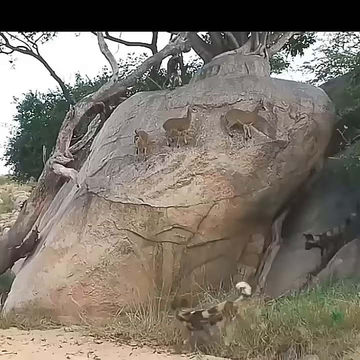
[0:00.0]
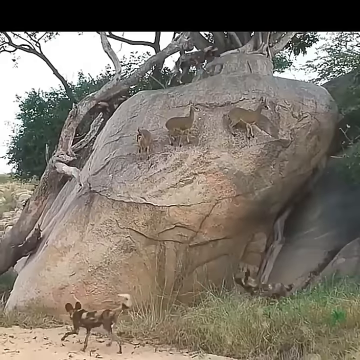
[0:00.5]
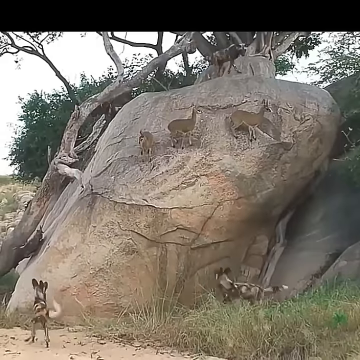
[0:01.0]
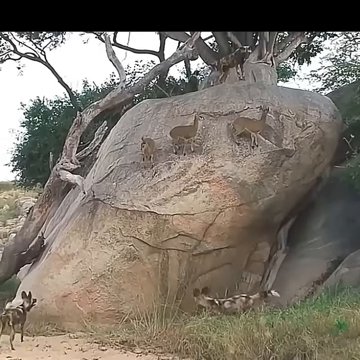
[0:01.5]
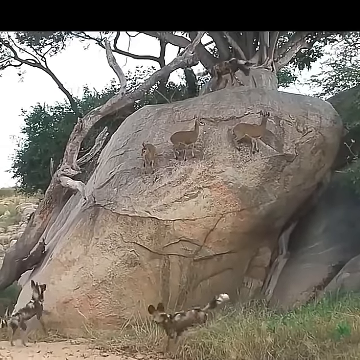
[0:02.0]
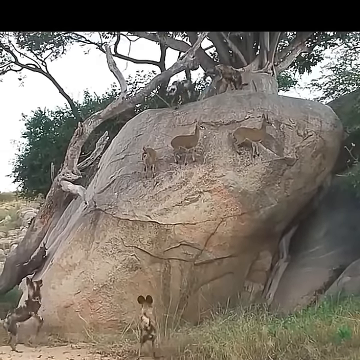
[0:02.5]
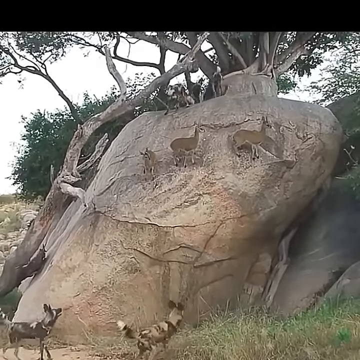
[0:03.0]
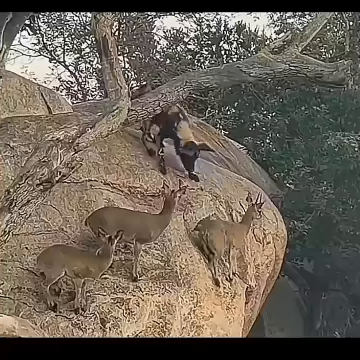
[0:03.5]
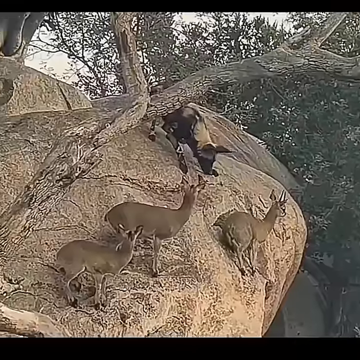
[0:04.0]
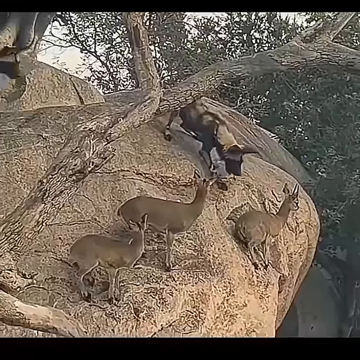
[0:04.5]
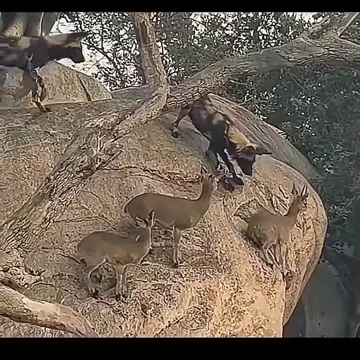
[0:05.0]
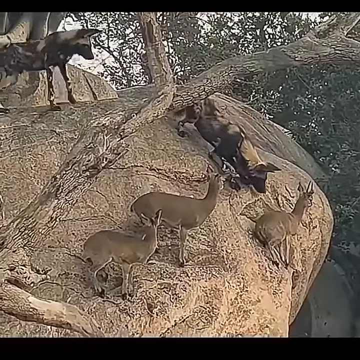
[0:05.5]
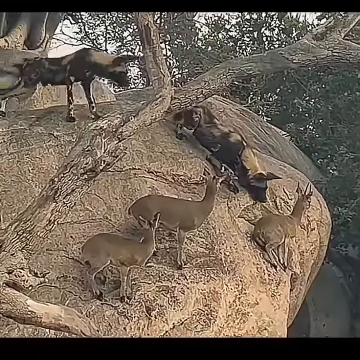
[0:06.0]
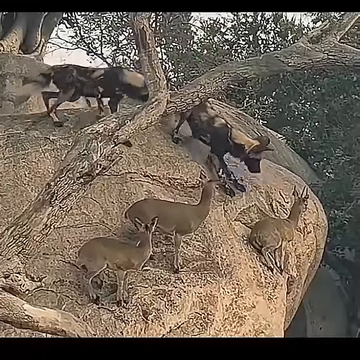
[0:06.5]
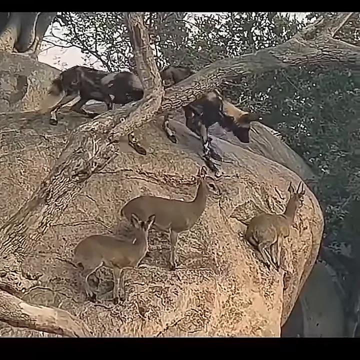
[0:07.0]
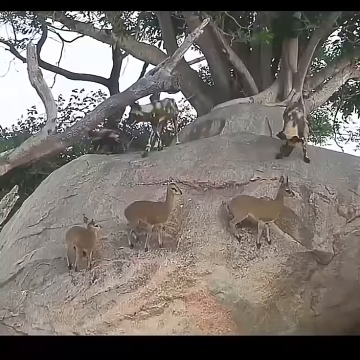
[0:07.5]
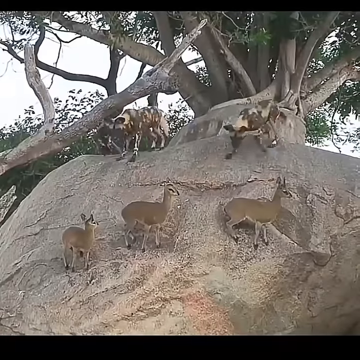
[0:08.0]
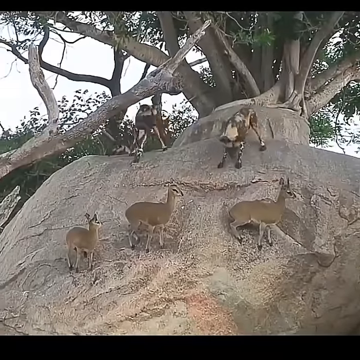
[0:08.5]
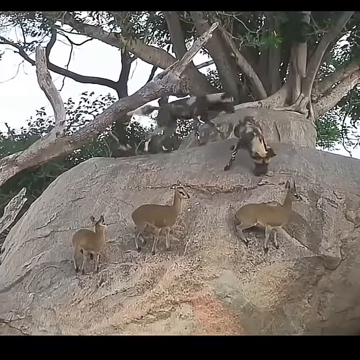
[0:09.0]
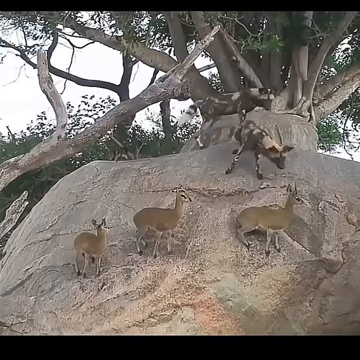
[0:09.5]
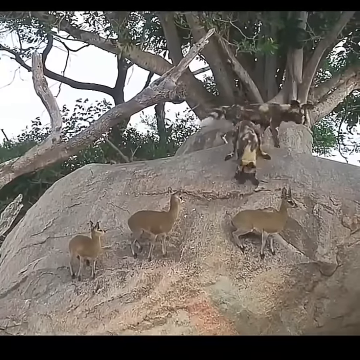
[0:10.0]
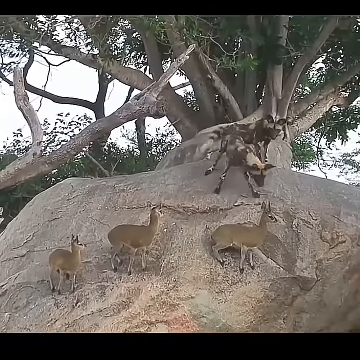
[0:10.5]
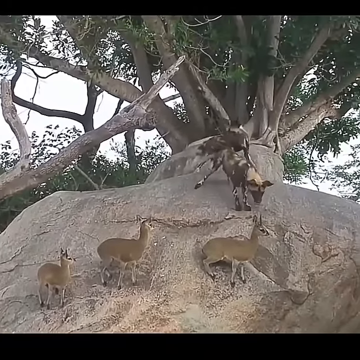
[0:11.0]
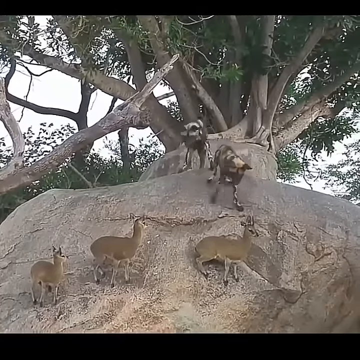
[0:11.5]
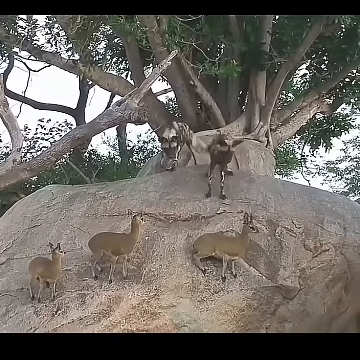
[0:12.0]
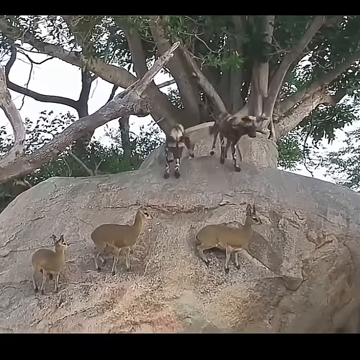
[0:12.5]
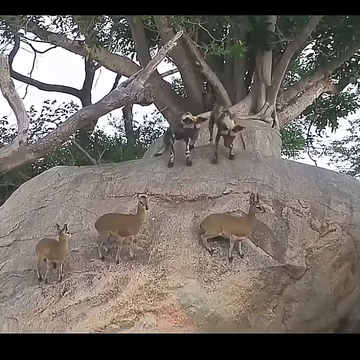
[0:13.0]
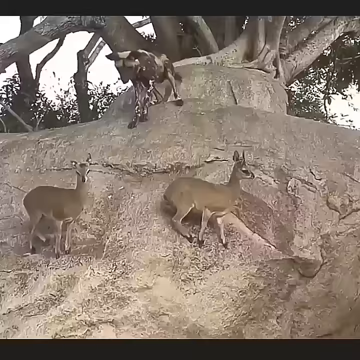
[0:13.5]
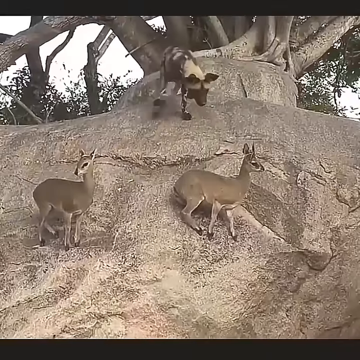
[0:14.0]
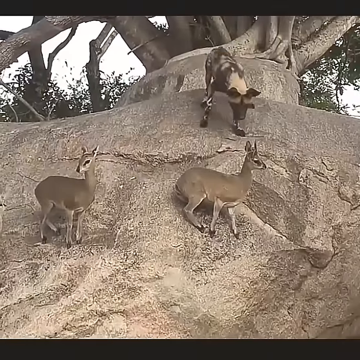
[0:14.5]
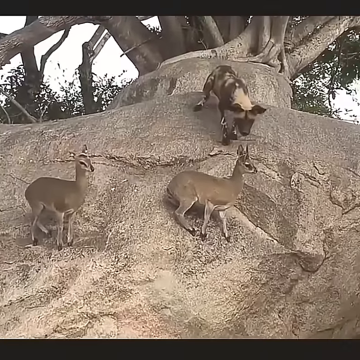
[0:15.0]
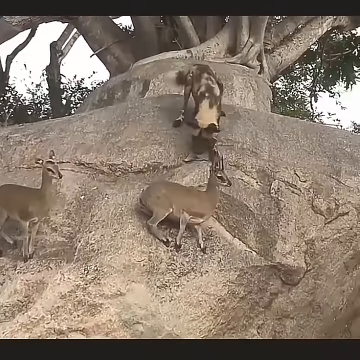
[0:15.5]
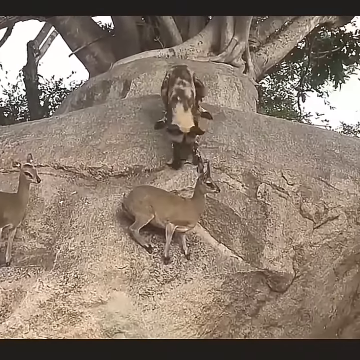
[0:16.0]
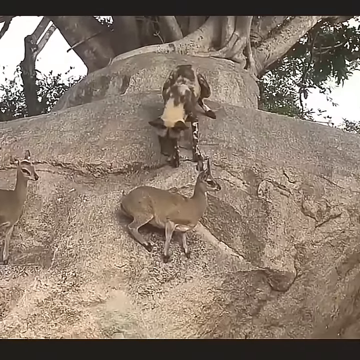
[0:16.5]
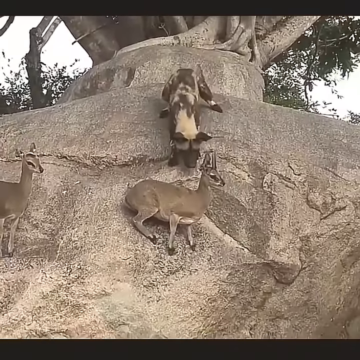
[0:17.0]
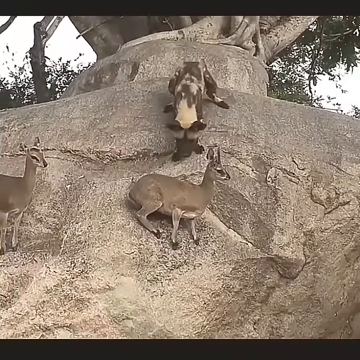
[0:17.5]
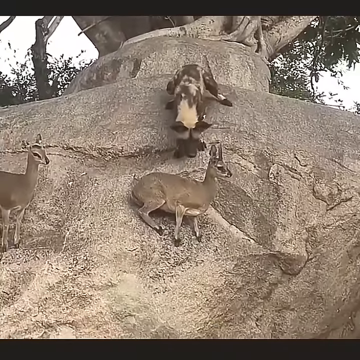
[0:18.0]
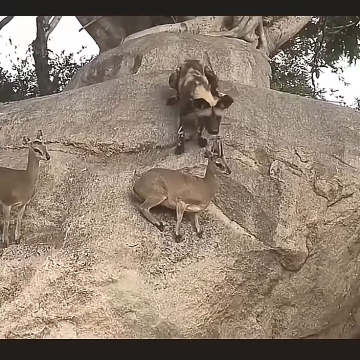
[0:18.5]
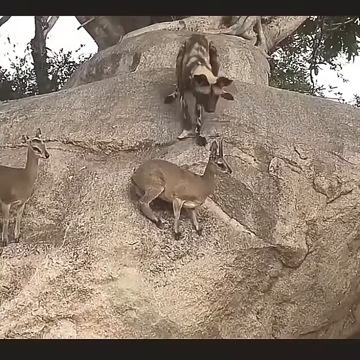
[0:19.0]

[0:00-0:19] Animals that look like deer, or possibly mountain goats, stand on the face of a rock. At the top of the rock there seems to be a pack of wild dogs, maybe three or four of them, trying to bark at, bite and get down towards the deer, but they cannot crawl down the face of the rock. Meanwhile, three deer stand motionless on the side face of the rock. There are also dogs underneath barking up at them. The video shows different viewing angles: from a little further away, the entire rock is visible with the dogs below and above, and other angles show the deer more closely, motionless, barely moving their legs and staying in position while the dogs struggle to reach them. The dogs try to lean over the side of the rock and start slipping off, but instead of falling they crawl backwards up to the top. They seem afraid of going down the face of the rock.